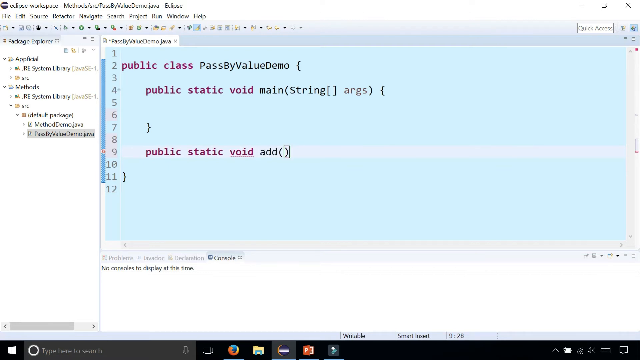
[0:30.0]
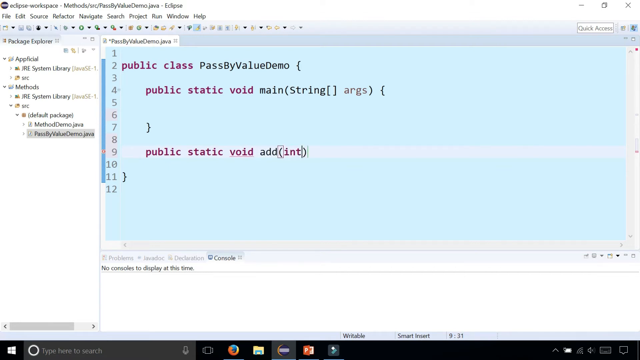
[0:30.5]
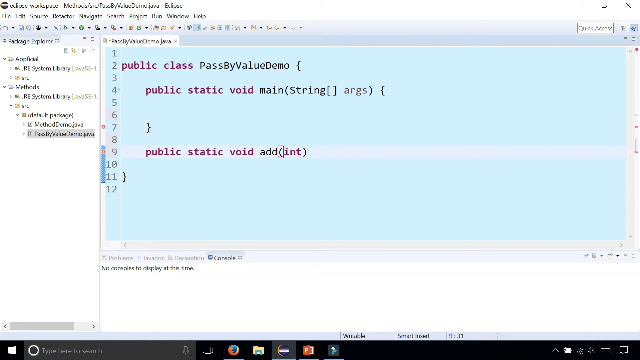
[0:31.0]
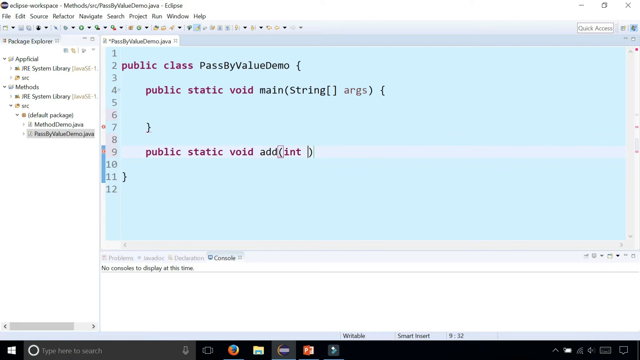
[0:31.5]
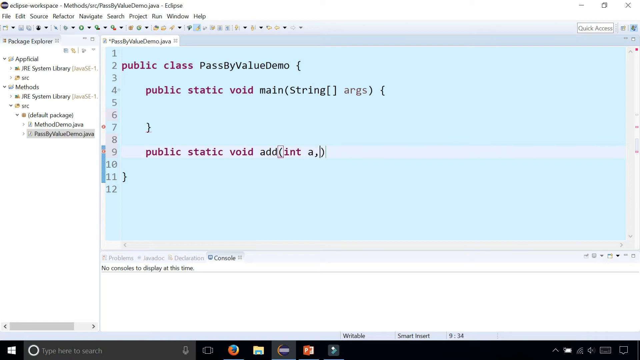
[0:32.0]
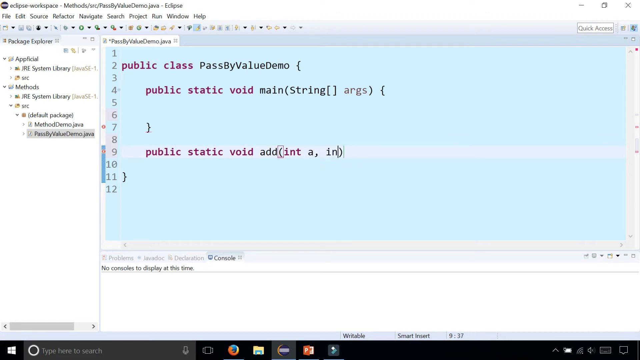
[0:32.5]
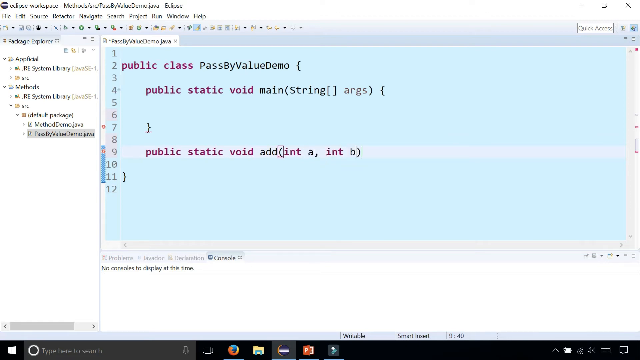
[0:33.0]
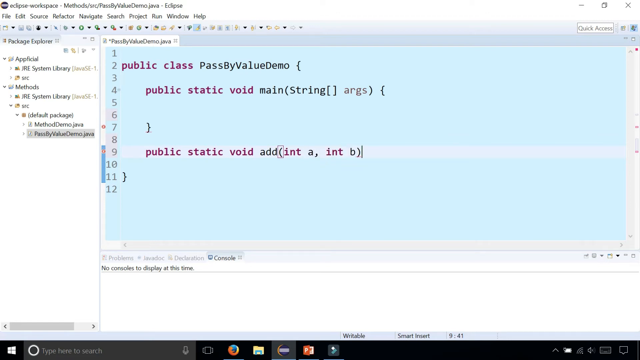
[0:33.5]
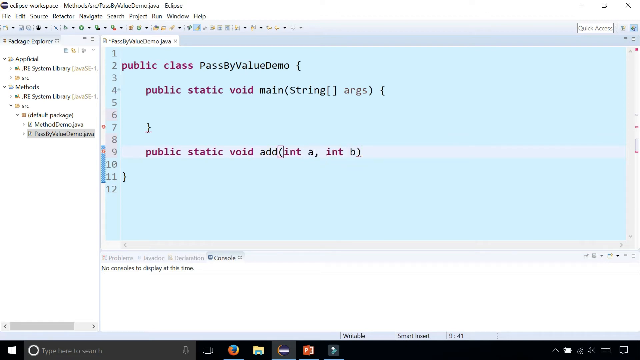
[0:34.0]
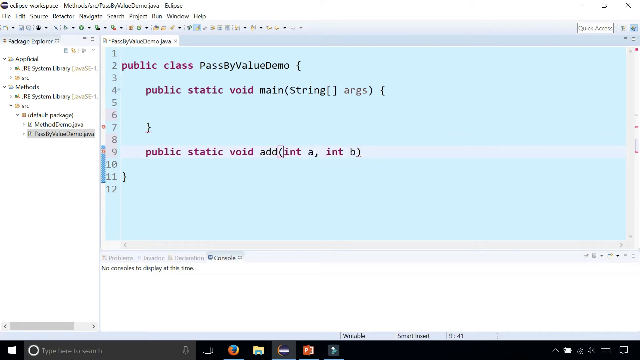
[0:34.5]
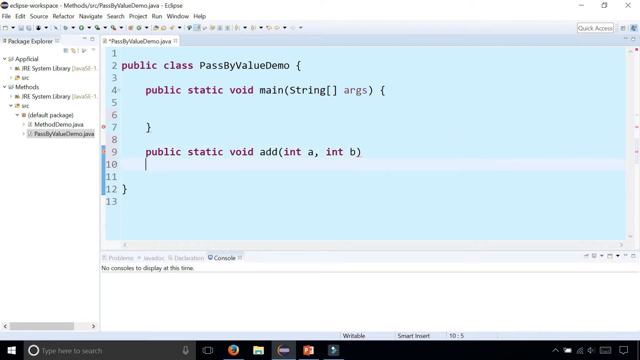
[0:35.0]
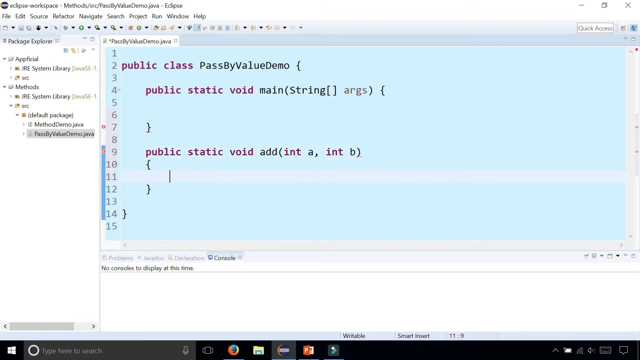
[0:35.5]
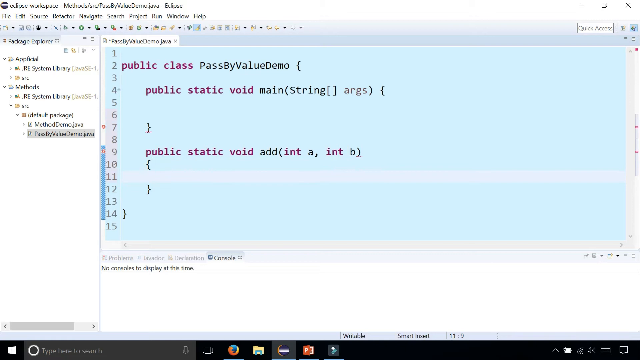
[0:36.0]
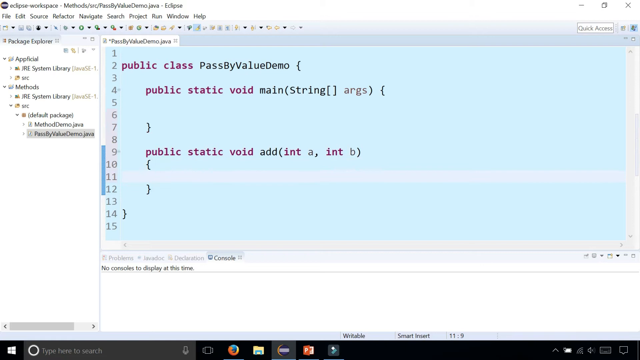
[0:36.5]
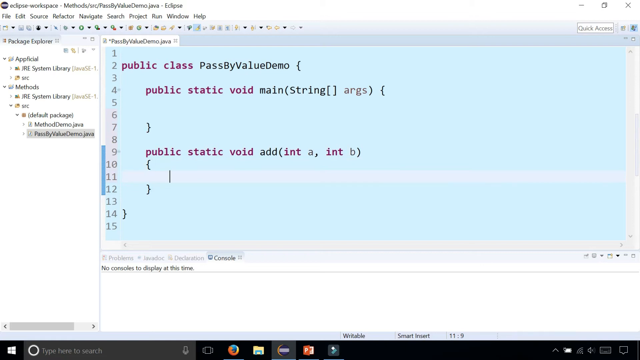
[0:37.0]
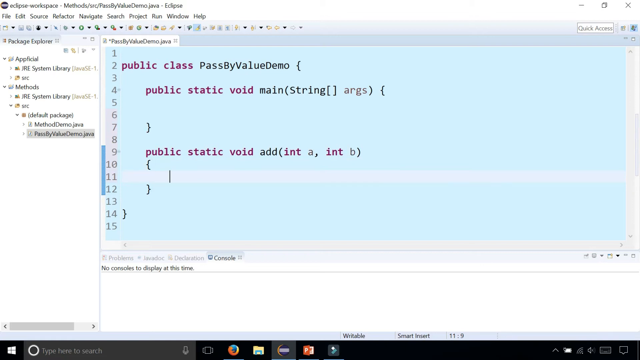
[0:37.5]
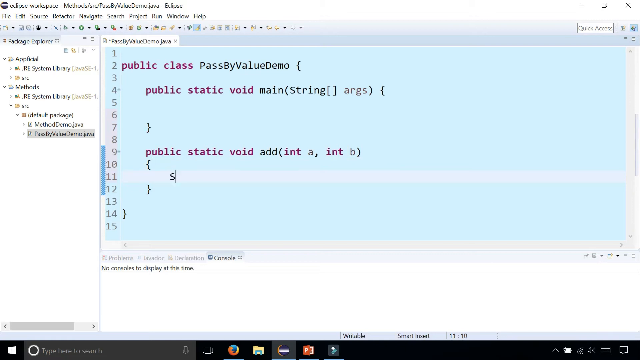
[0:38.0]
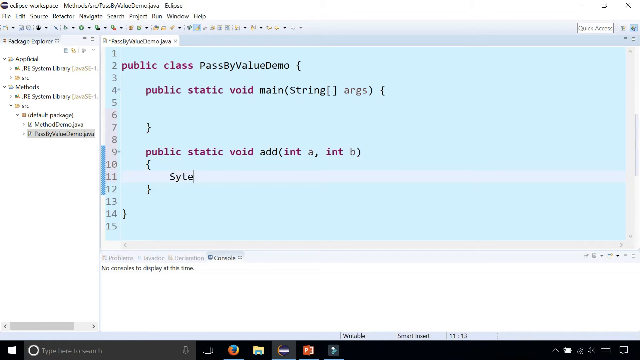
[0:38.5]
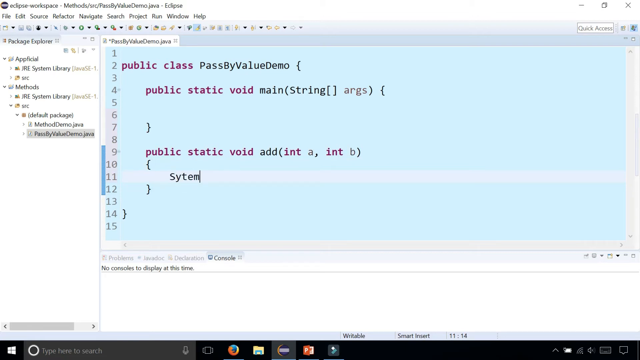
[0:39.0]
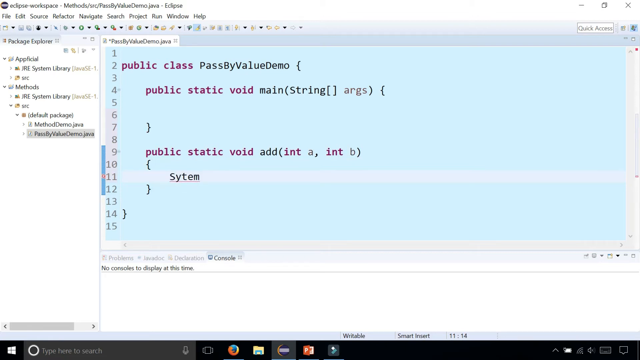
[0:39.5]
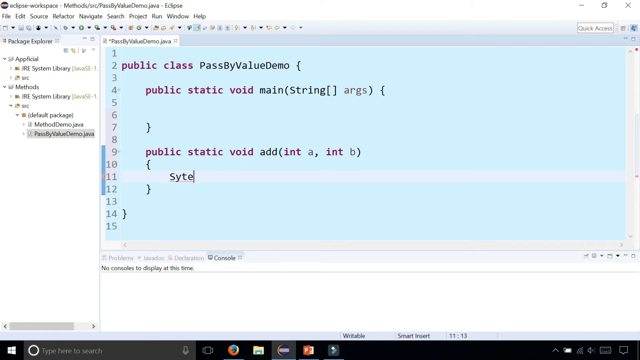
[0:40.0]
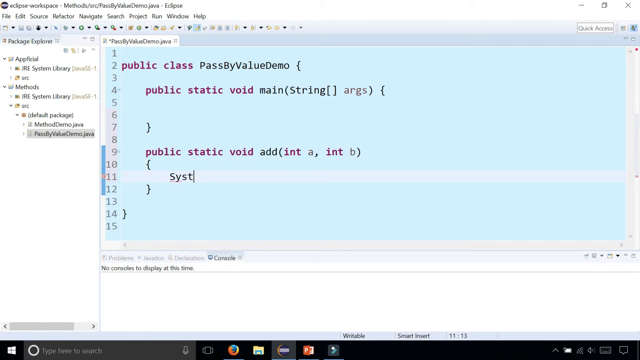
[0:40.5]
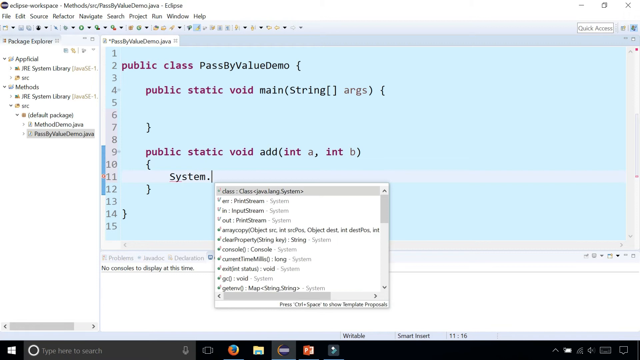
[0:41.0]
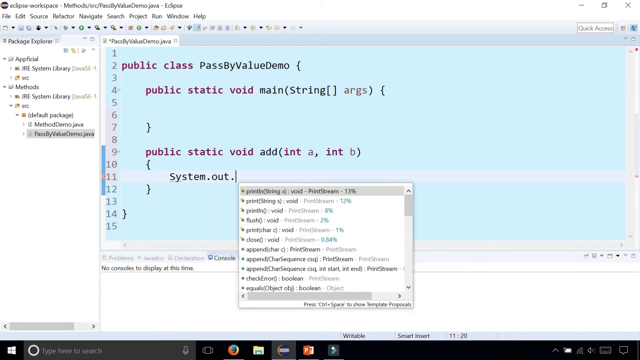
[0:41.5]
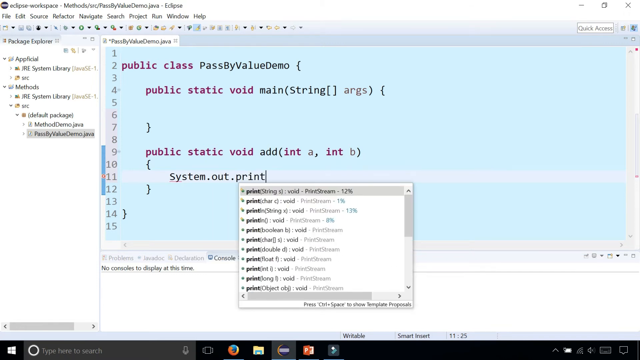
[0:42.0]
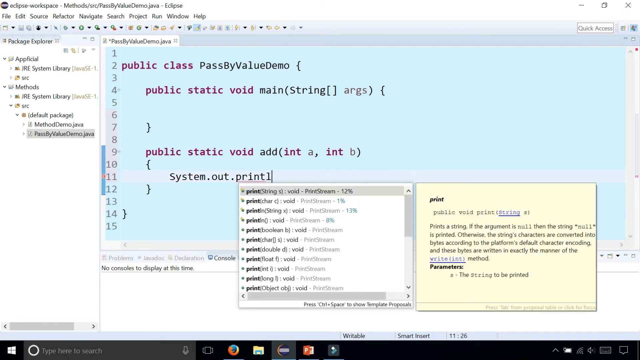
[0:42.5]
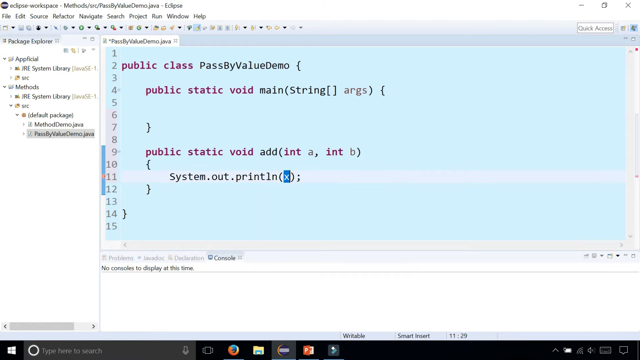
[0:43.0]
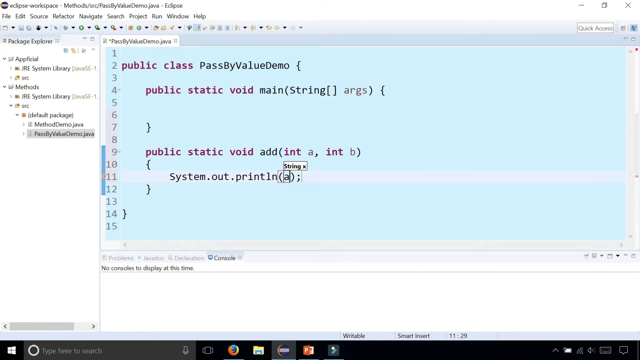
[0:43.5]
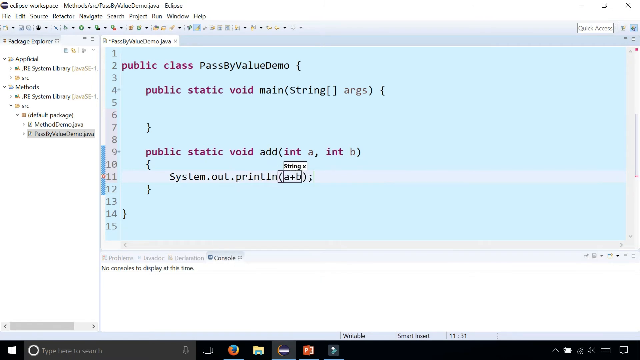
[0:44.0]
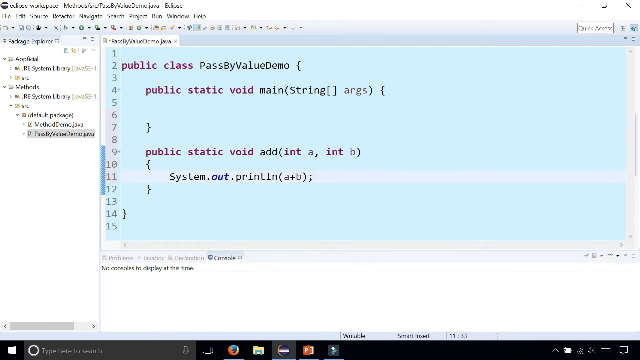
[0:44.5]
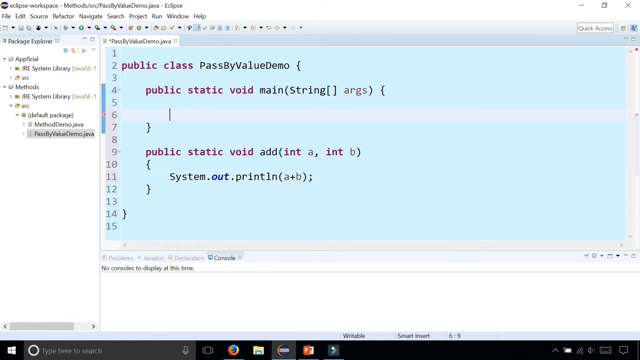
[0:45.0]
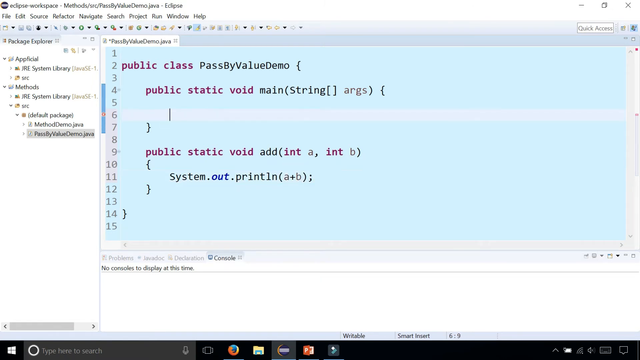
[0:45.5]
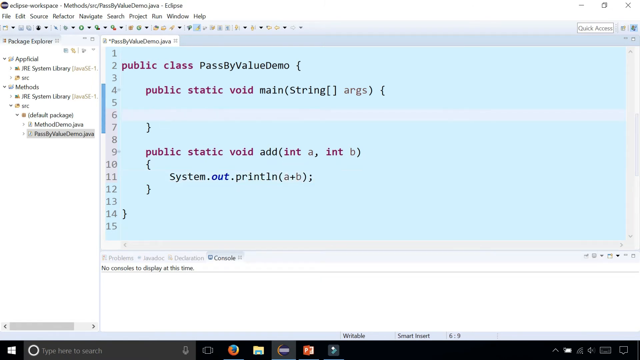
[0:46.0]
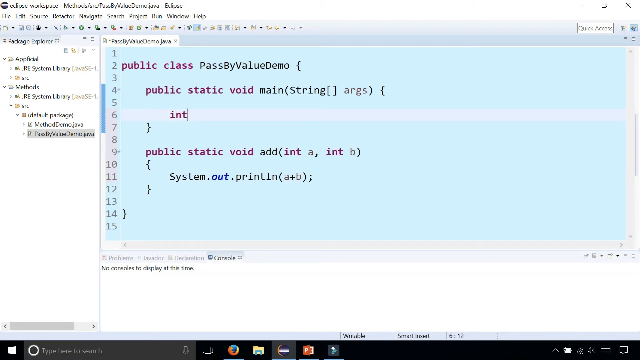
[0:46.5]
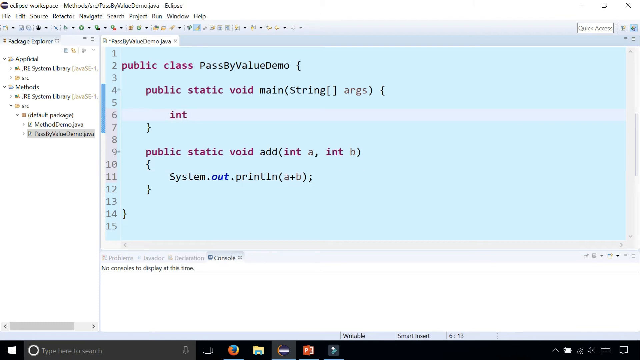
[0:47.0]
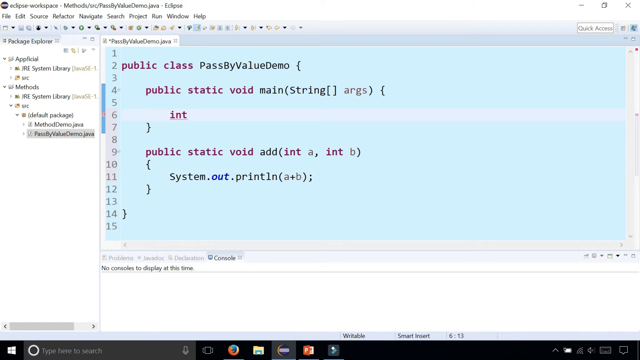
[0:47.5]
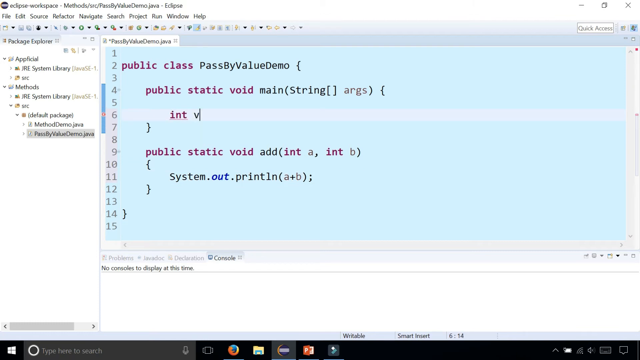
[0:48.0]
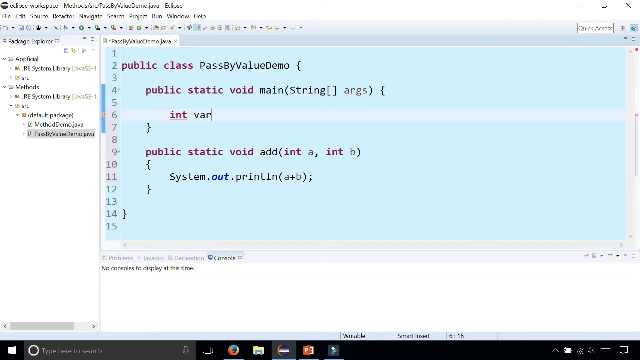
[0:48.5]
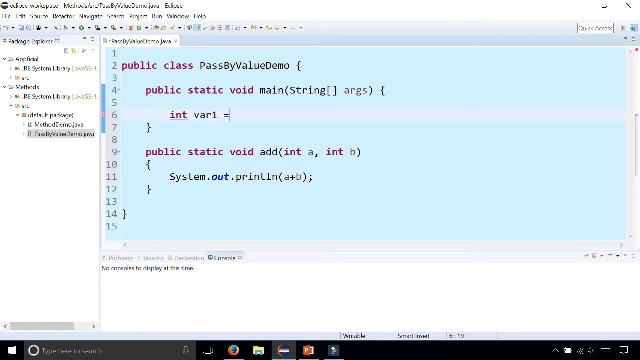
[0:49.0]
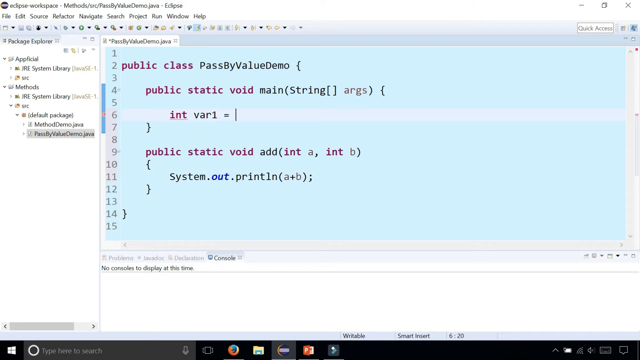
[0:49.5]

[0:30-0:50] In the computer program Eclipse Workspace, someone types public static void add(int a, int b), System.out.println(a + b) and int var1 = 5. The menu across the top reads File, Edit, Source, Refactor, Navigate, Search, Project, Run, Window, Help, and a tree lists items including JRE System Library, Default Package and PassByValueDemo.java. The screen where they are typing has a mint green background. A second, white screen at the bottom reads "no consoles to display at this time." They appear to be typing instructions for Java. A series of menus pop up as they type, showing options such as class, in, out, console, exit and void. "Quick Access" is at the top right of the screen. A print box appears reading "public void print string. Prints a string if the argument is null. Then the string null is printed. Otherwise, the string's characters are converted into bytes according to the platform's default character encoding."